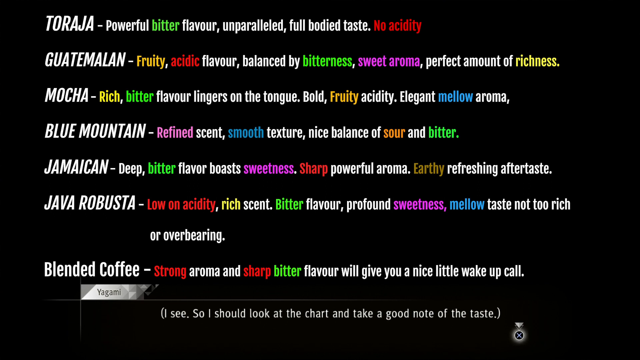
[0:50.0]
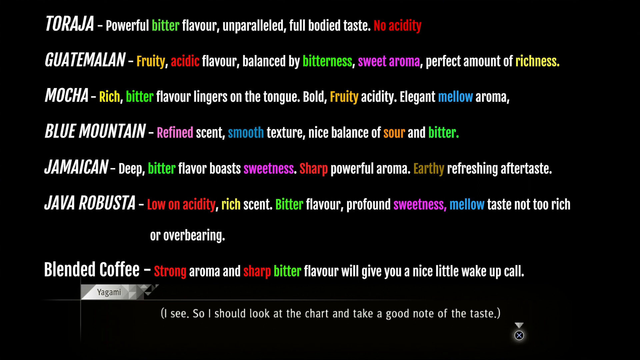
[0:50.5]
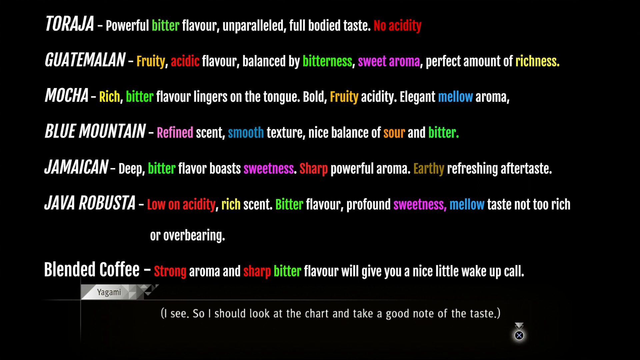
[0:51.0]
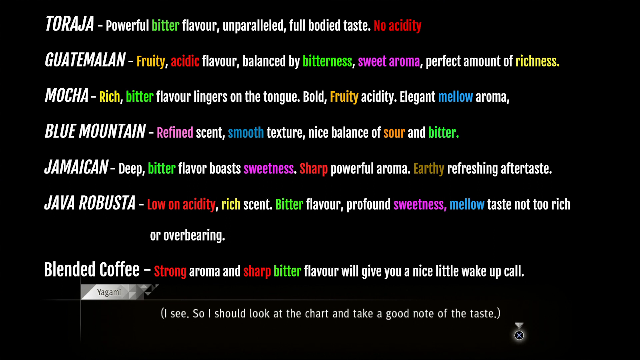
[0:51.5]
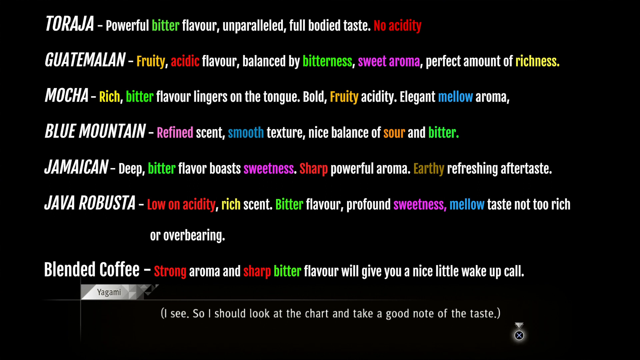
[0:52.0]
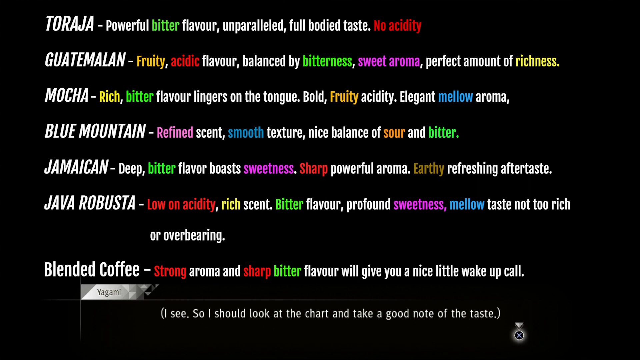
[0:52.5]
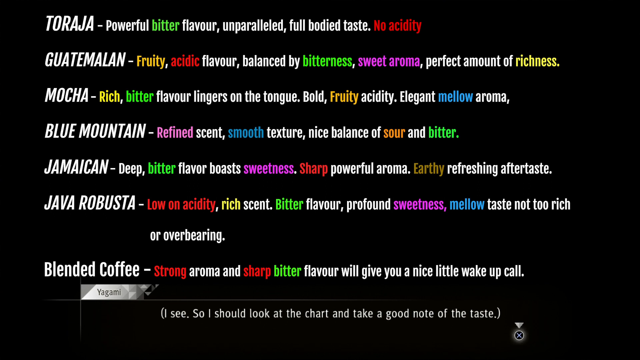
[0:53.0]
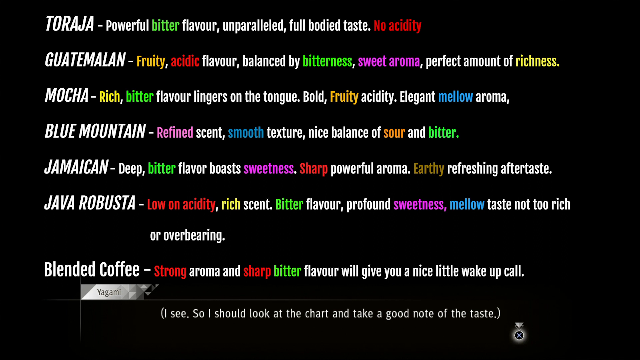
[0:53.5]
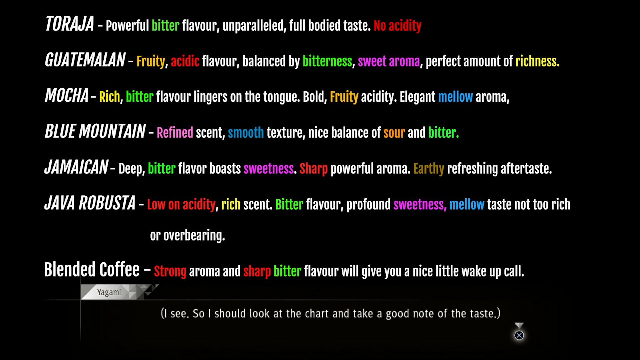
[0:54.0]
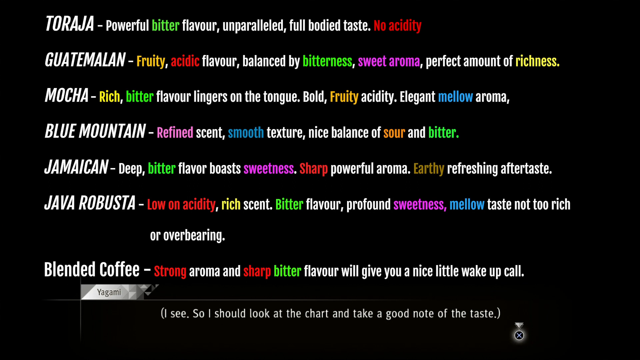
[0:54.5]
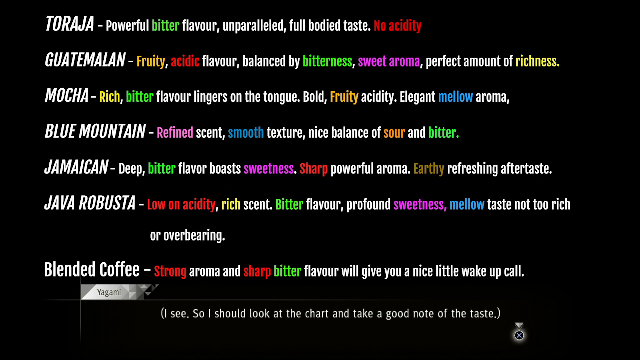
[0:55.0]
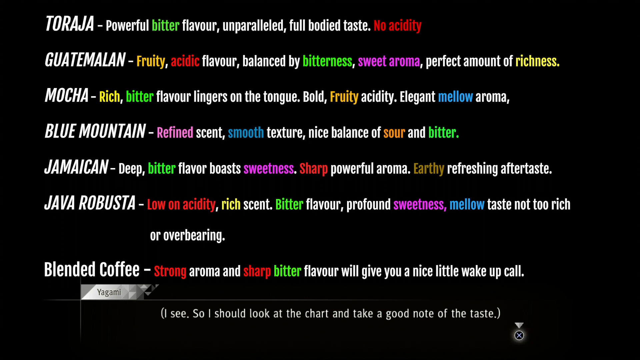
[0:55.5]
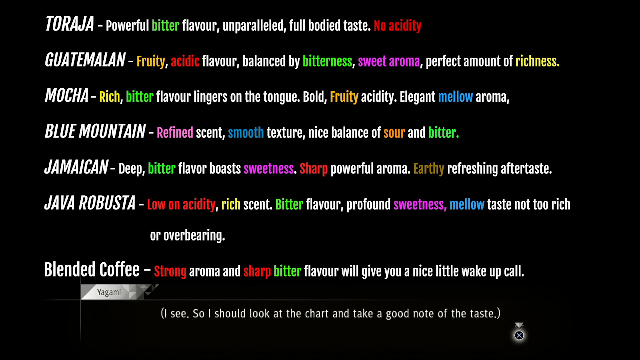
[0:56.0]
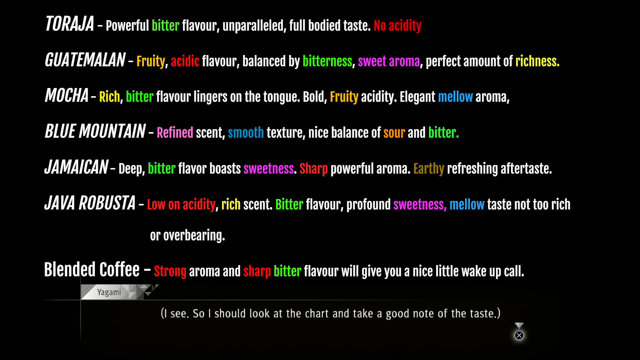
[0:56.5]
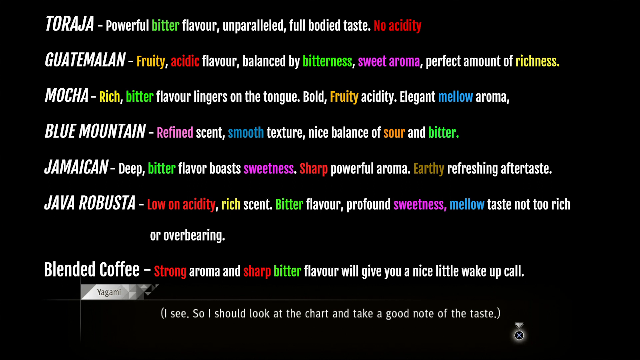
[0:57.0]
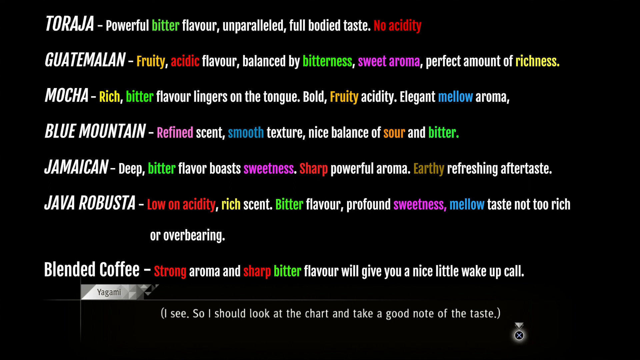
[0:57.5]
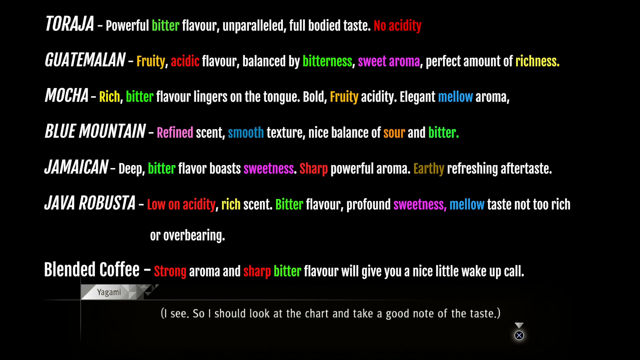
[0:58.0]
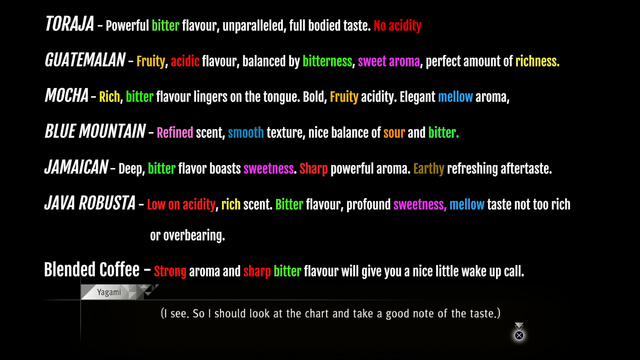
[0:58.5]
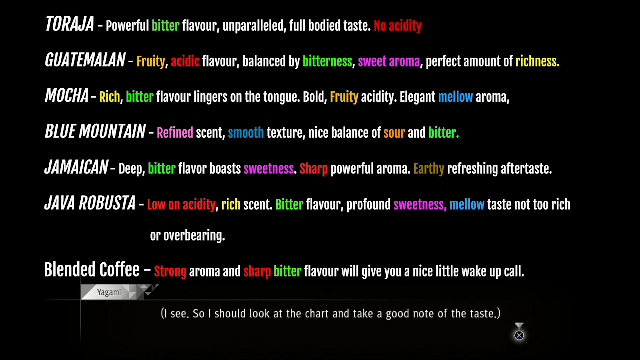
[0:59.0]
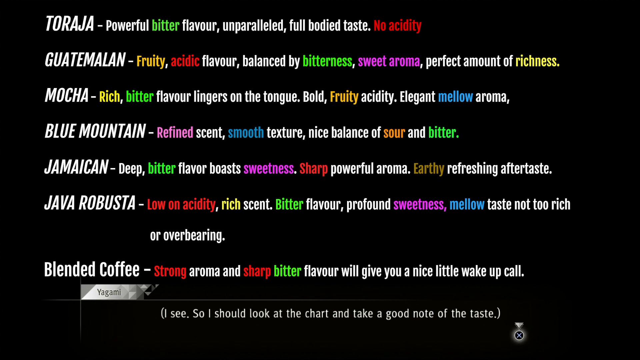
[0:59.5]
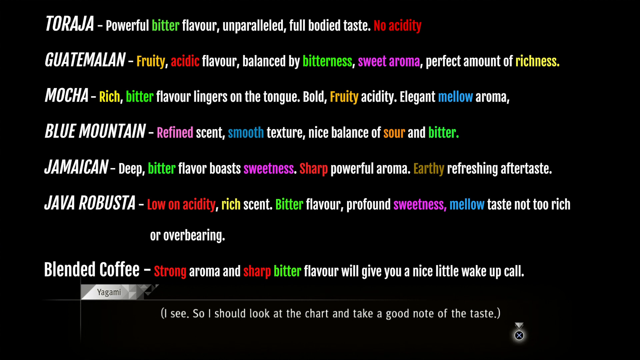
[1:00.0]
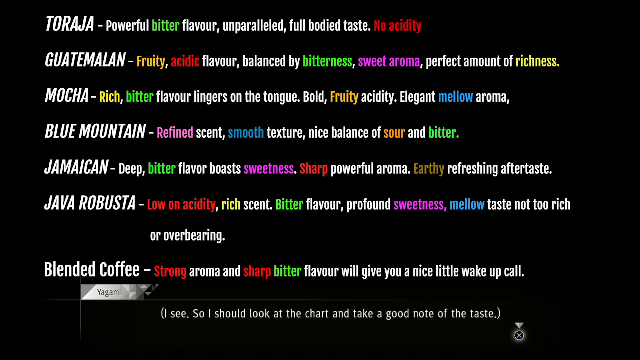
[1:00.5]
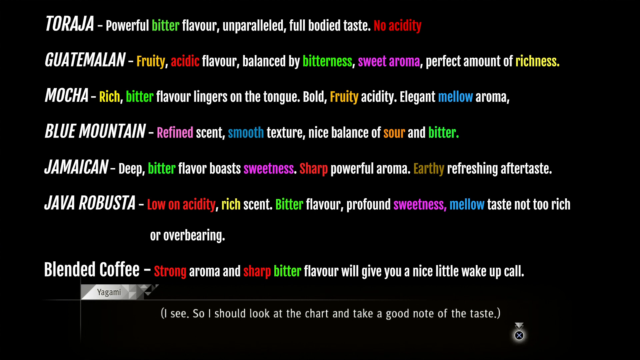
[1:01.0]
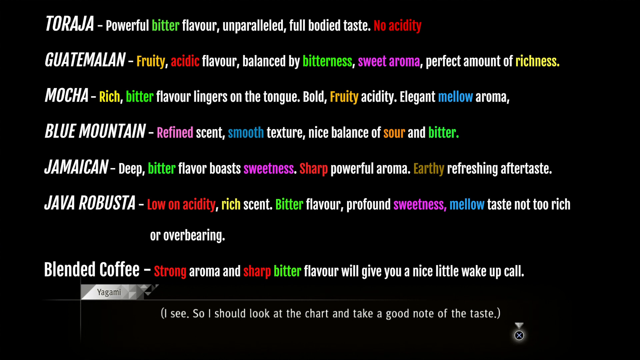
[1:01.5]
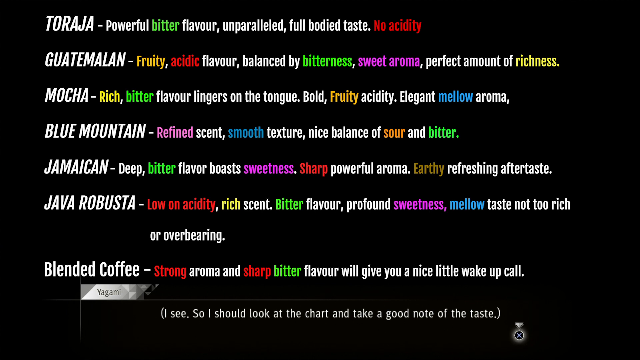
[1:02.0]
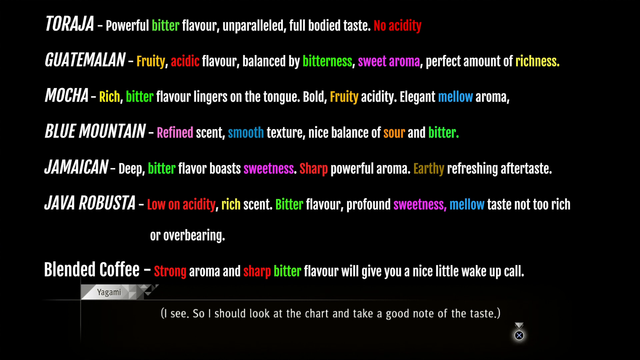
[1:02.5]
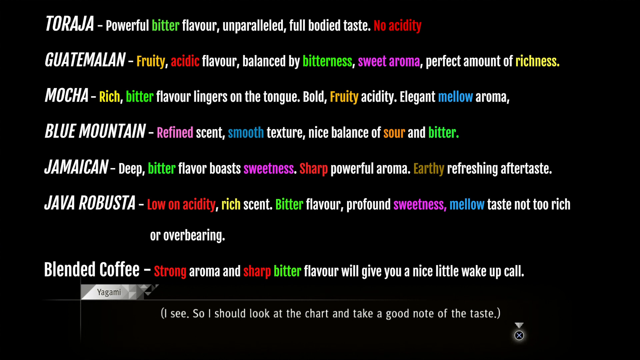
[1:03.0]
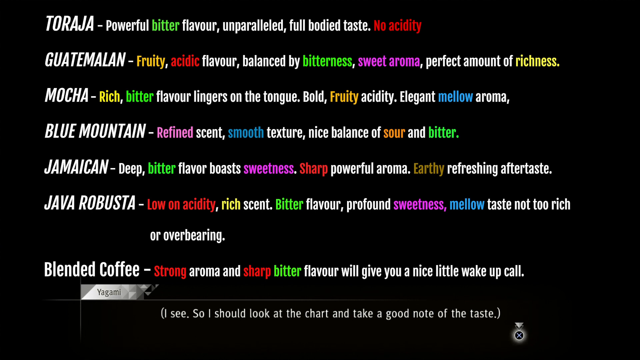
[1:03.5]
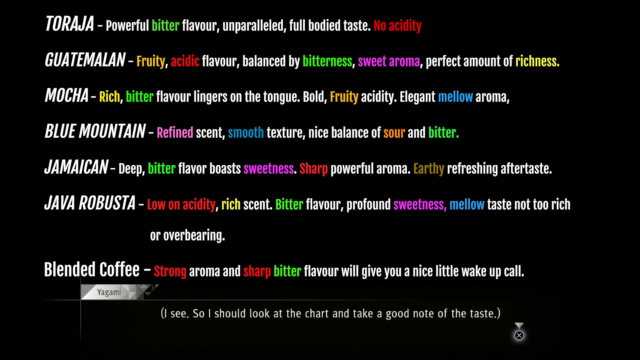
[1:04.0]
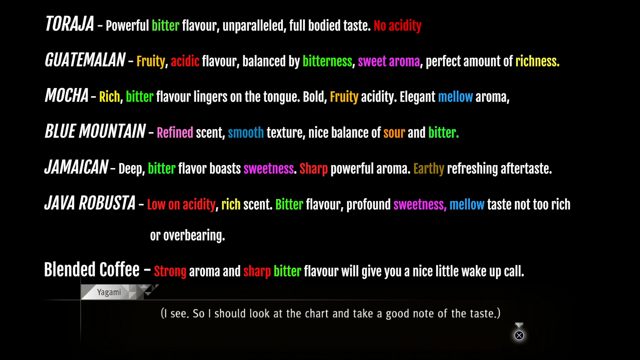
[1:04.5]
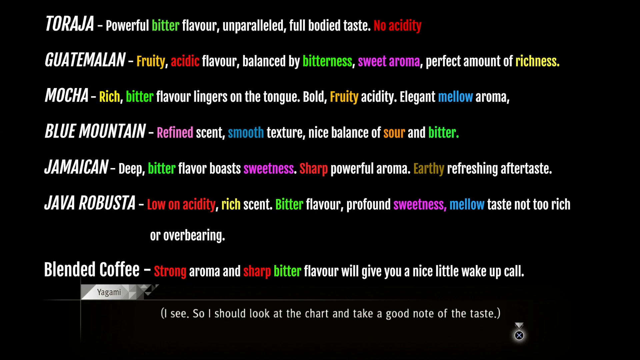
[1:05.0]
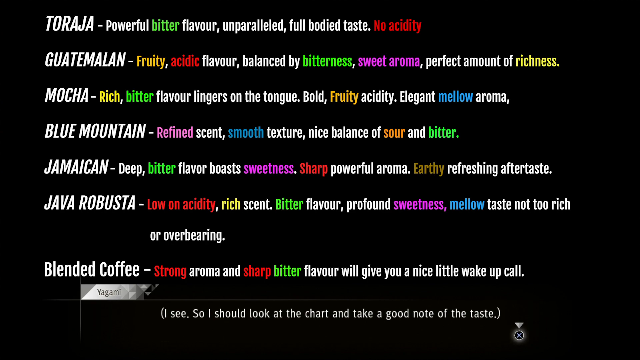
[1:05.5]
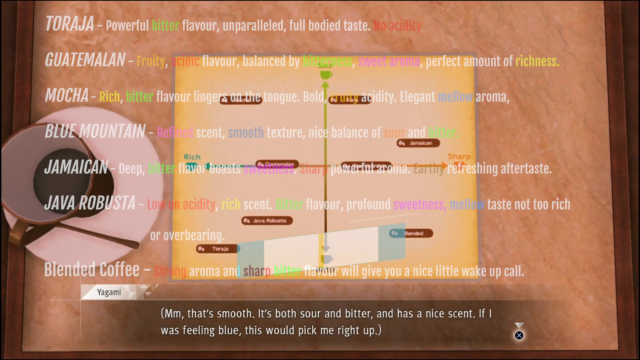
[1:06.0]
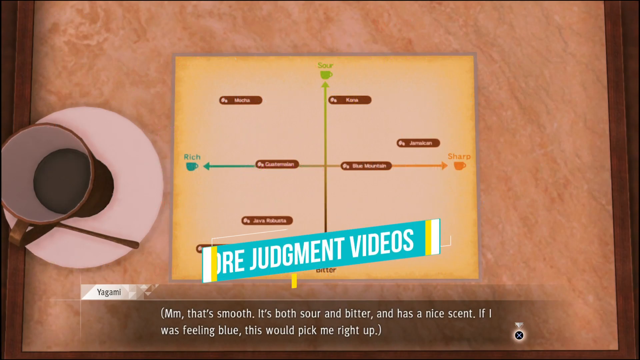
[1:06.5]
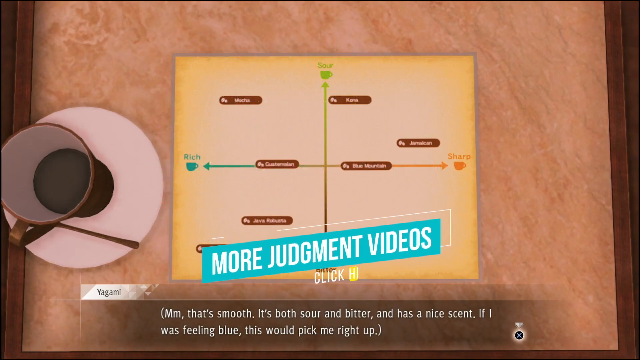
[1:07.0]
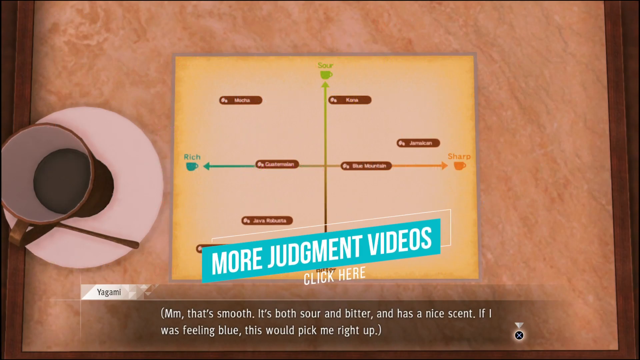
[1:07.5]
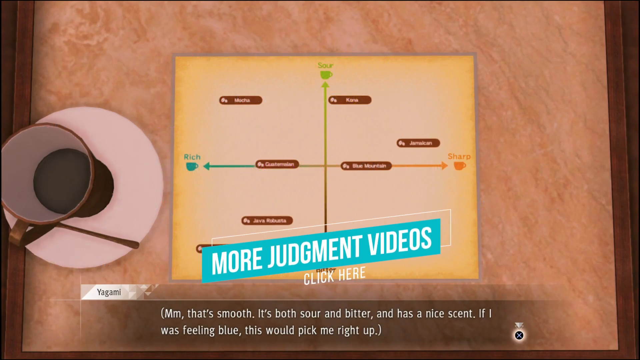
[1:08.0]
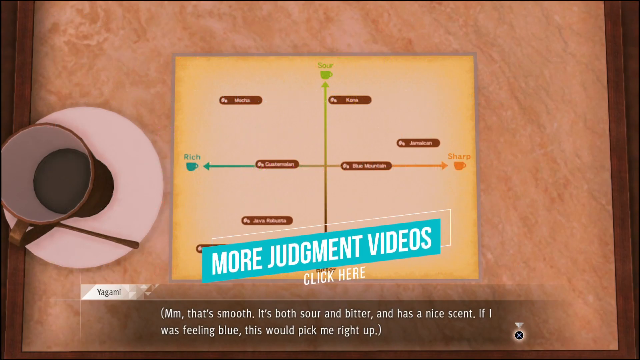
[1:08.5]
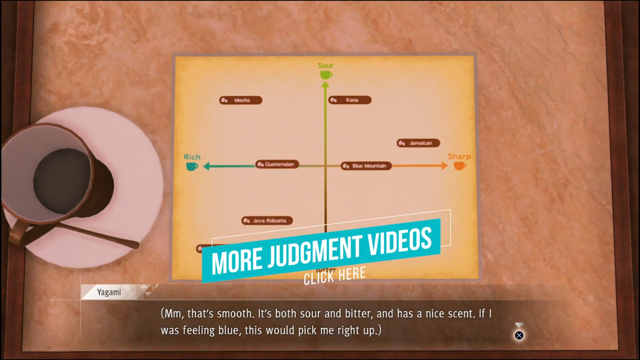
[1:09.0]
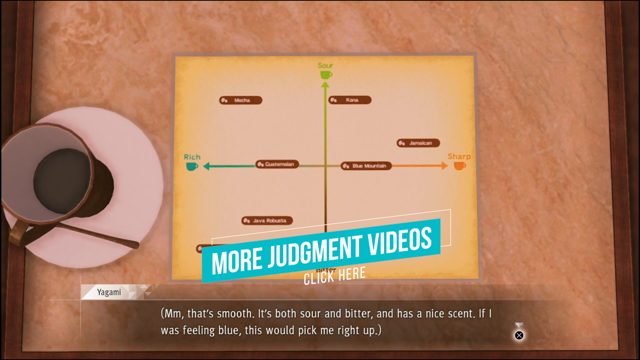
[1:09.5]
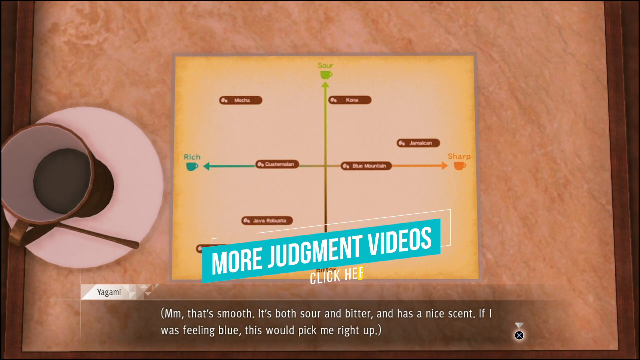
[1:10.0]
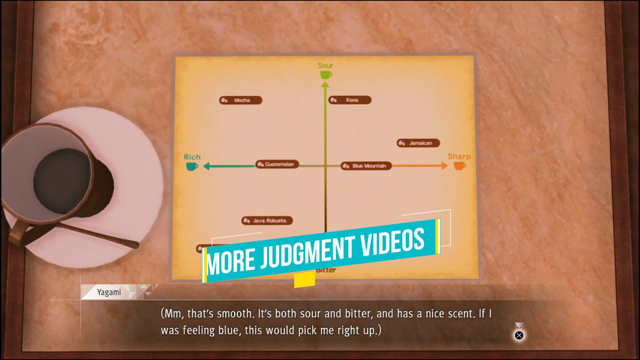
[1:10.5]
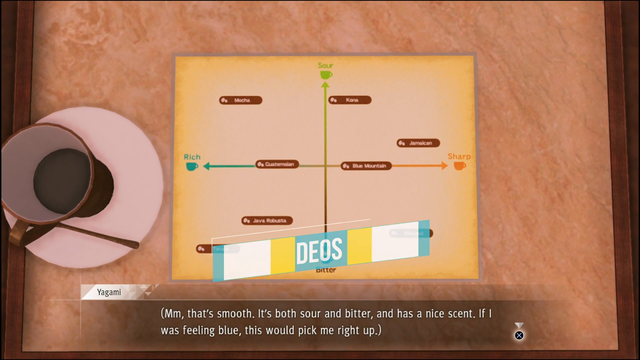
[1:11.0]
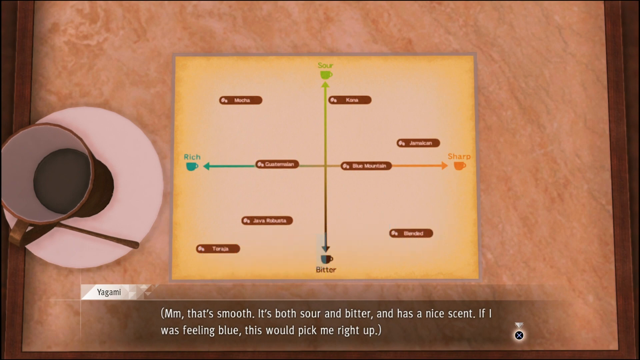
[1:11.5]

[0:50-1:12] A black screen lists several different types of coffee, with each name in white text and a description of the coffee's flavor to the right. The first option is Toraja: "powerful bitter flavor, unparalleled full body taste, no acidity." Next is Guatemalan: "fruity acidic flavor balanced by bitterness, sweet aroma, and the perfect amount of richness." Below that is Mocha: "rich bitter flavor, lingers on the tongue, bold fruity acidity, elegant mellow aroma." Below that is Blue Mountain: "refined scent, smooth texture, nice balance of sour and bitter." Below that is Jamaican: "deep bitter flavor, boasts sweetness, sharp powerful aroma, earthy refreshing aftertaste." Below that is Java Robusta: "low on acidity, rich scent, bitter flavor, profound sweetness, mellow taste, not too rich or overbearing." And below that is blended coffee: "strong aroma, and sharp bitter flavor will give you a nice little wake-up call." Different words in the descriptions are shown in colored text to emphasize different aspects of the coffee's flavor. Eventually, the video switches over to an end screen.